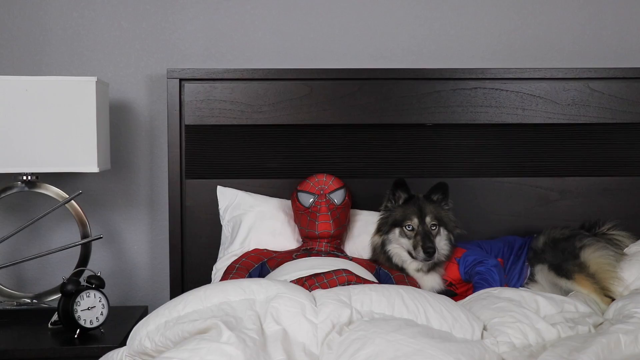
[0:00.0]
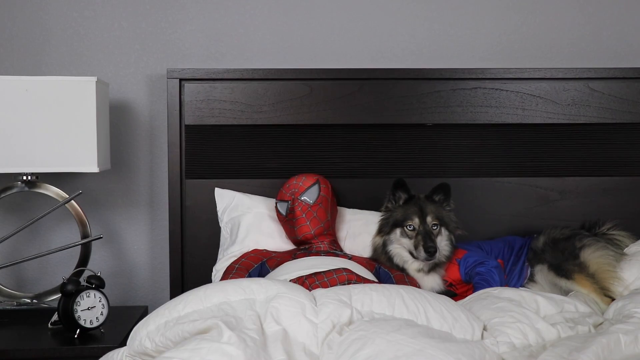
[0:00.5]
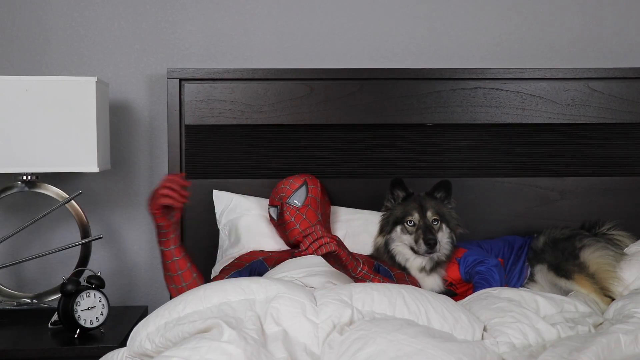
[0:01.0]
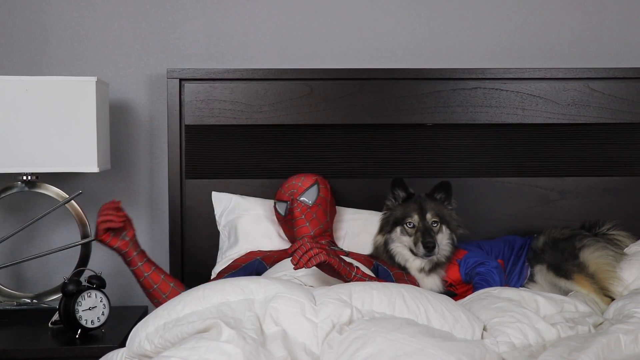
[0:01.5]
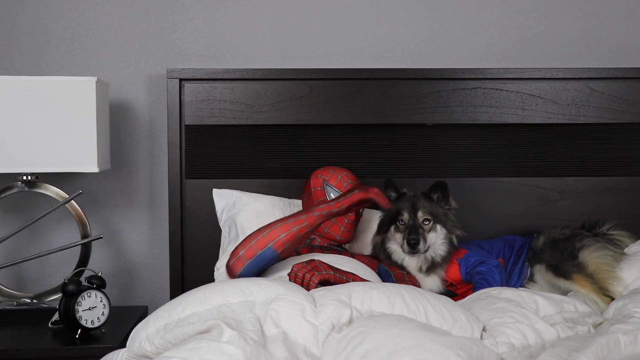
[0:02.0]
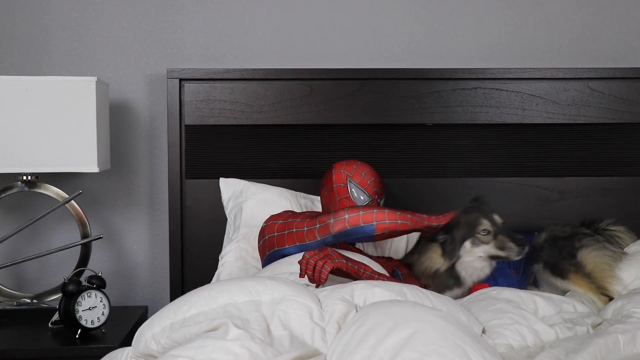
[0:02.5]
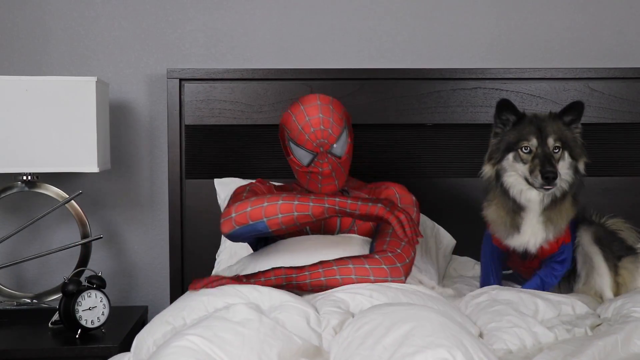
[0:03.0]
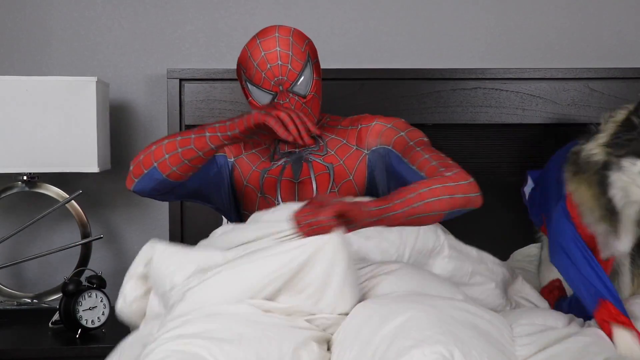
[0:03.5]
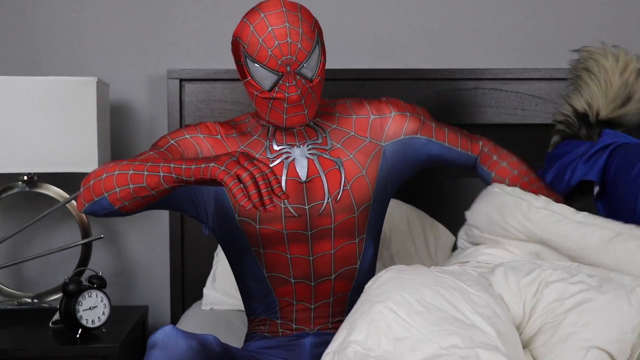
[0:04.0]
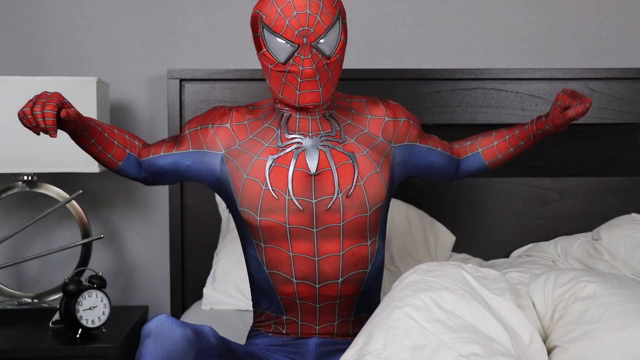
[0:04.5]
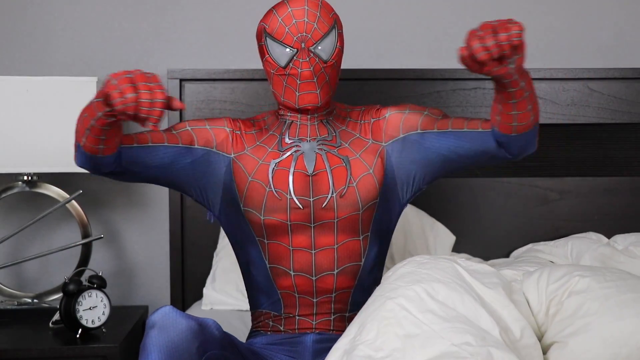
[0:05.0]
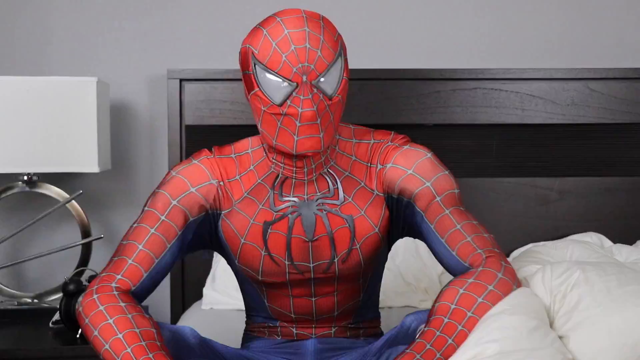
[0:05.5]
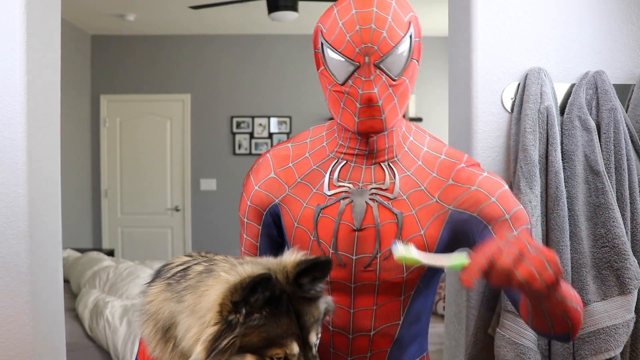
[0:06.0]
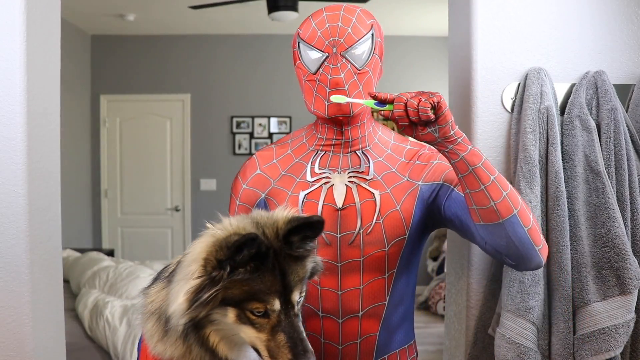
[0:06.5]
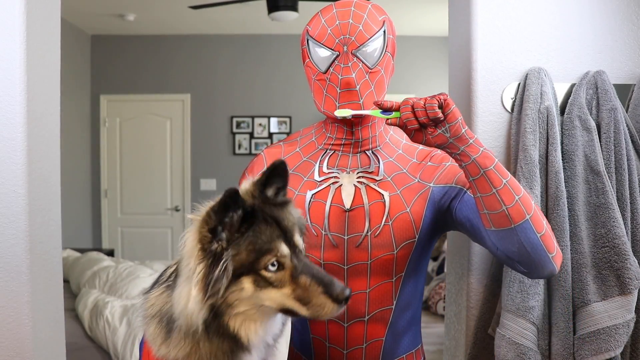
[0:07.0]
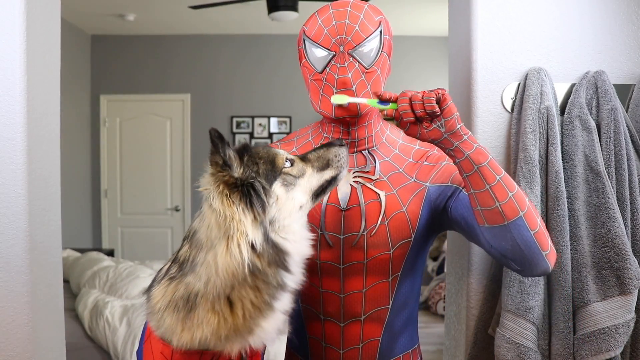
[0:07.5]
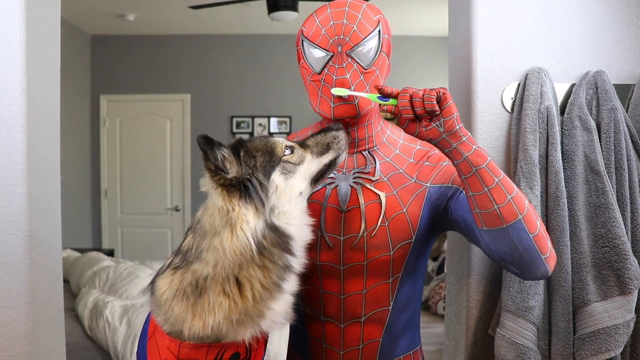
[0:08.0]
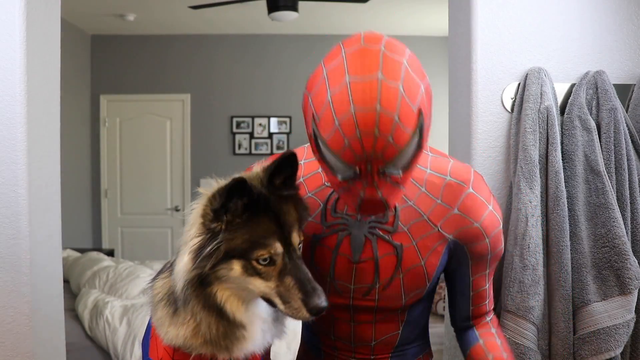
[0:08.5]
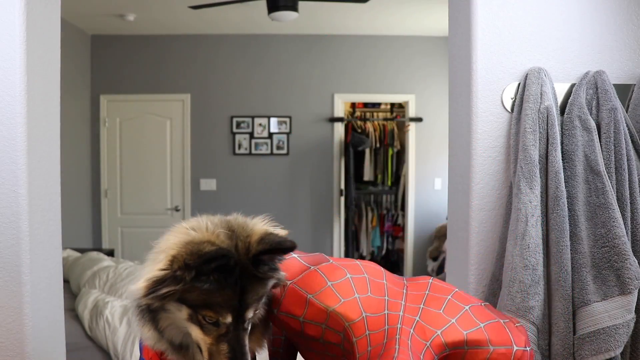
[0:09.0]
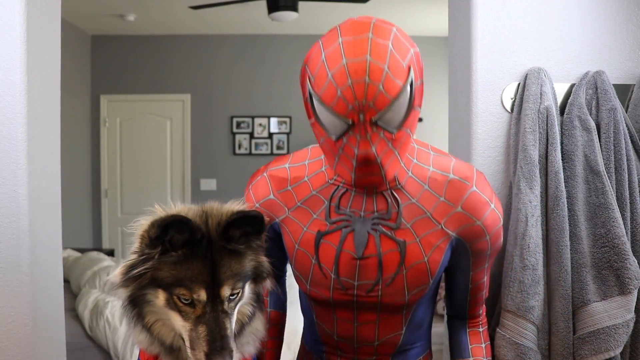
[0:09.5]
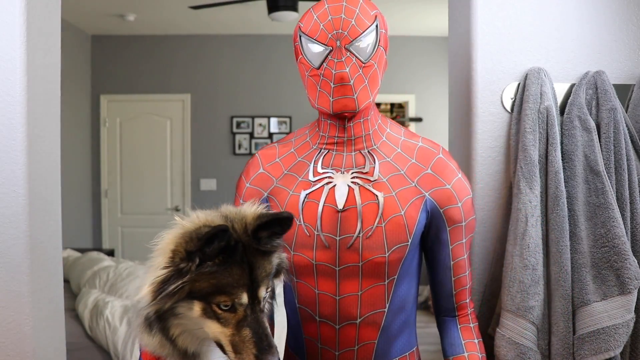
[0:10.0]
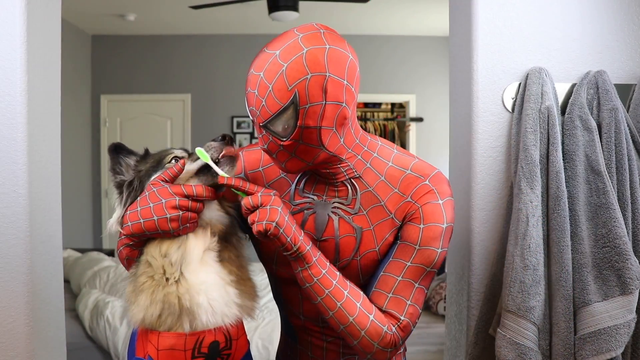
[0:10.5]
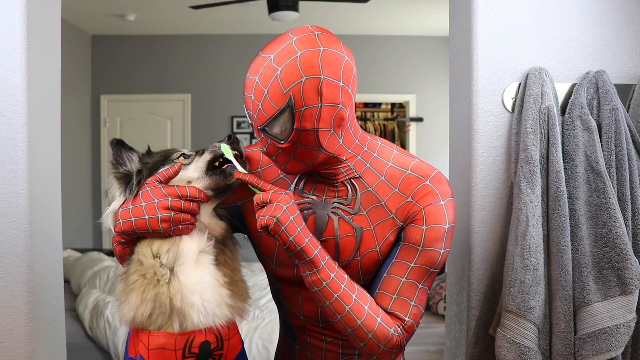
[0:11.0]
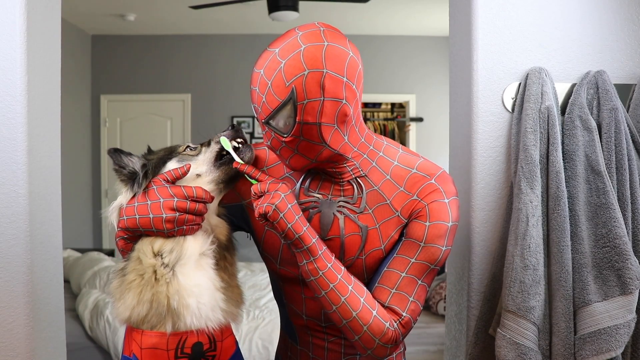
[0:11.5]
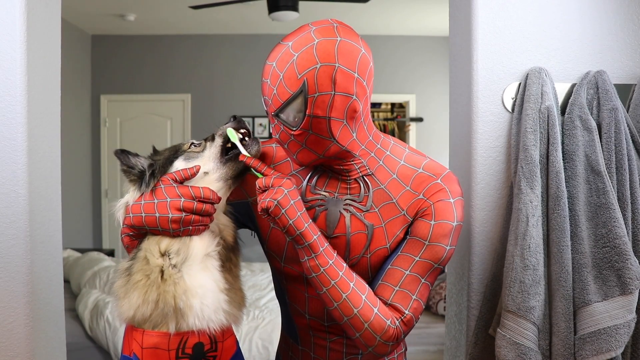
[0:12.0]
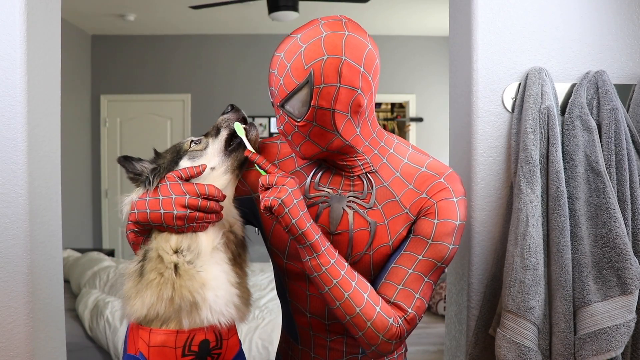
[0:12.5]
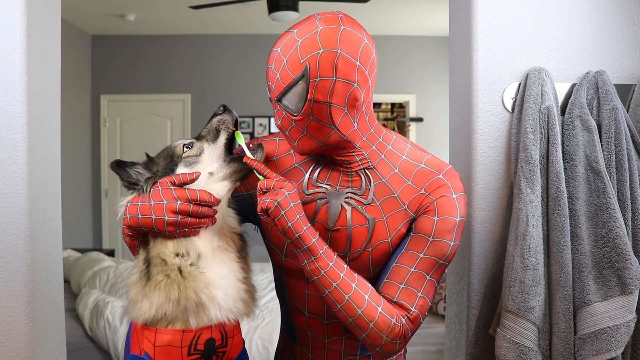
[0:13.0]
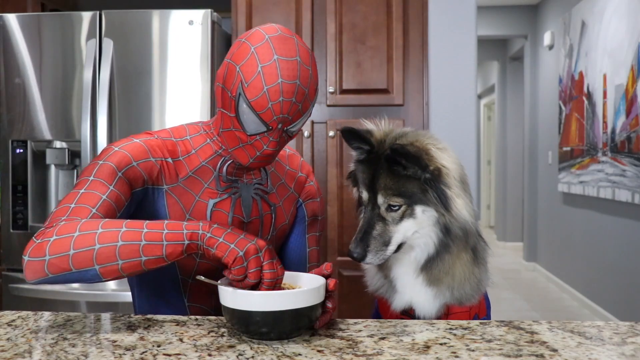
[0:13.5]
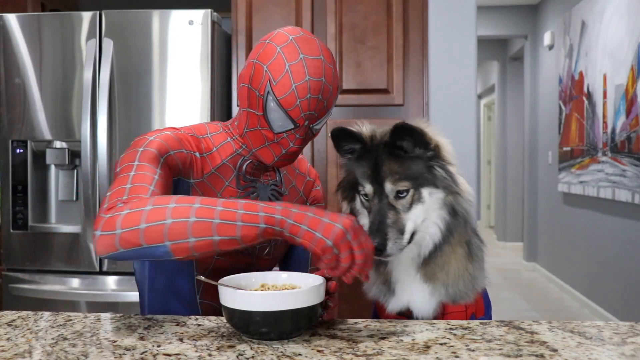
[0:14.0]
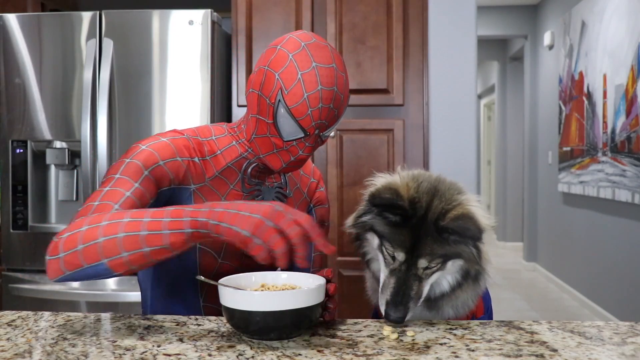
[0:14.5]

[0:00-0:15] A man dressed as Spider-Man is in bed with a fuzzy, fluffy dog wearing Spider-Man pajamas, and text reads "The Life of Spider-Dog." The dog is lying on the pillow; it is never asleep. As he gets out of bed, the man does a little stretch and appears to turn off an alarm clock. The two go to the bathroom, where Spider-Man pretends to brush his teeth; the toothbrush never actually goes into his mouth because his costume is closed over the mouth area. The dog has black, fluffy ears, a black mask-like patch of darker fur on its face, a white, fluffy chest, and white on the sides of its face. The dog looks like it is trying to sniff the toothpaste, so Spider-Man brushes the dog's teeth with the same toothbrush. They then go into the kitchen, sit down, and he feeds the dog a few pieces of cereal.